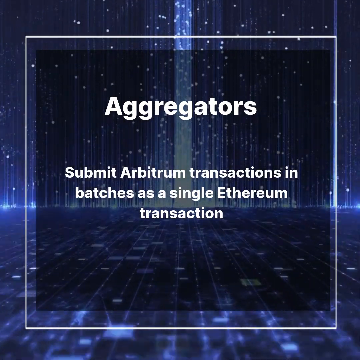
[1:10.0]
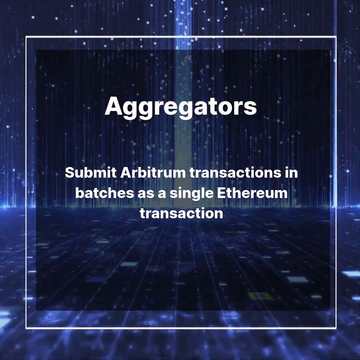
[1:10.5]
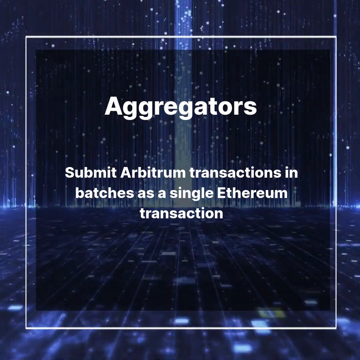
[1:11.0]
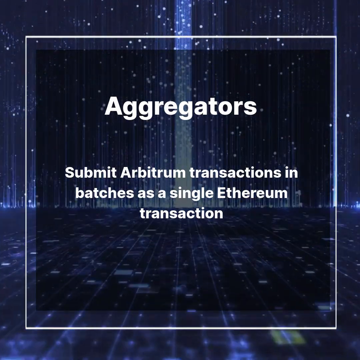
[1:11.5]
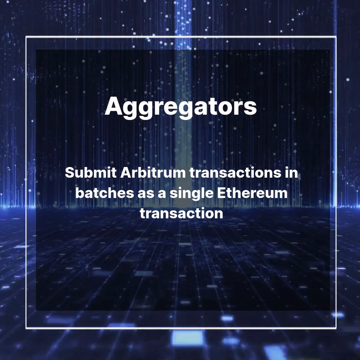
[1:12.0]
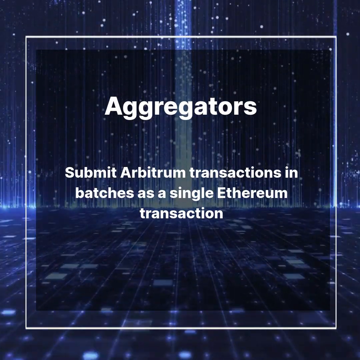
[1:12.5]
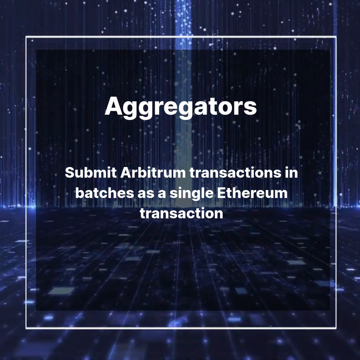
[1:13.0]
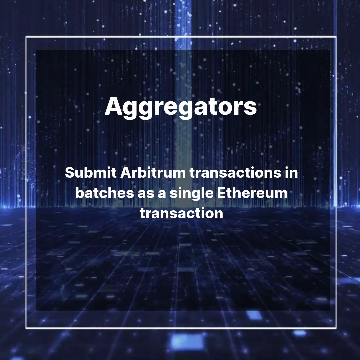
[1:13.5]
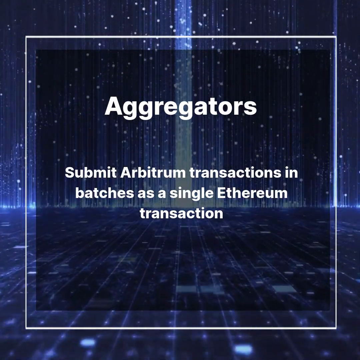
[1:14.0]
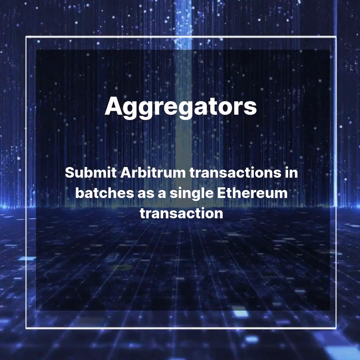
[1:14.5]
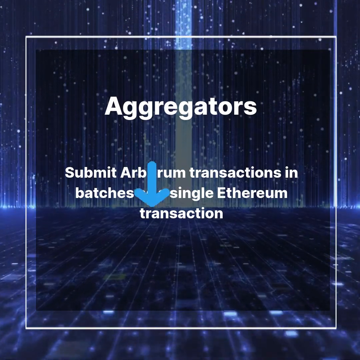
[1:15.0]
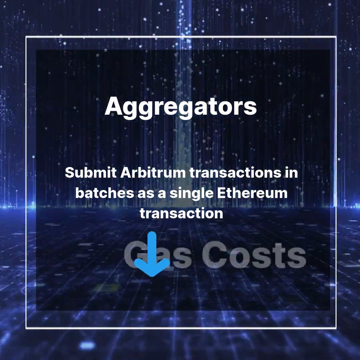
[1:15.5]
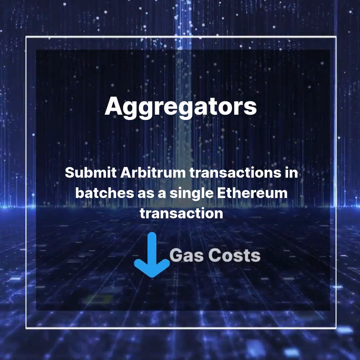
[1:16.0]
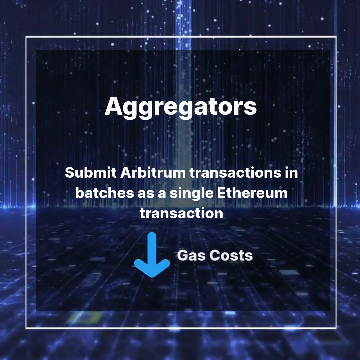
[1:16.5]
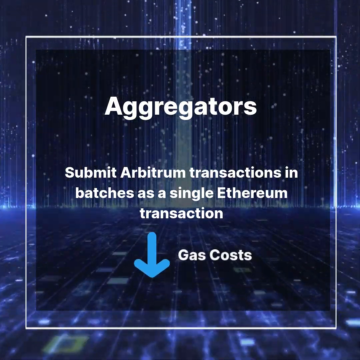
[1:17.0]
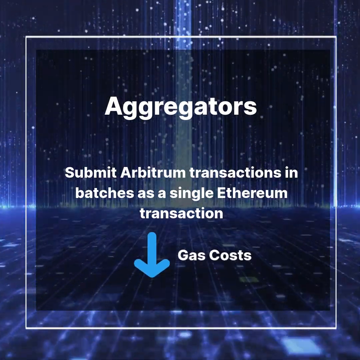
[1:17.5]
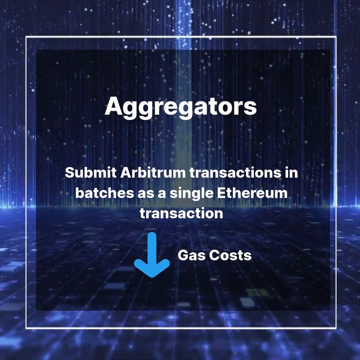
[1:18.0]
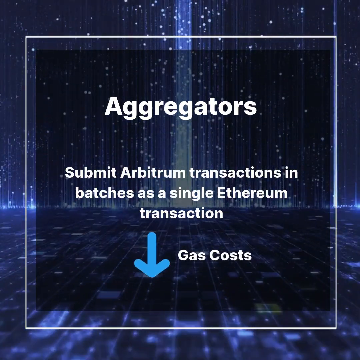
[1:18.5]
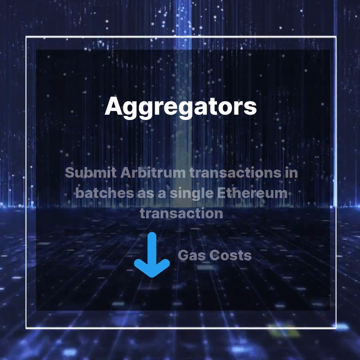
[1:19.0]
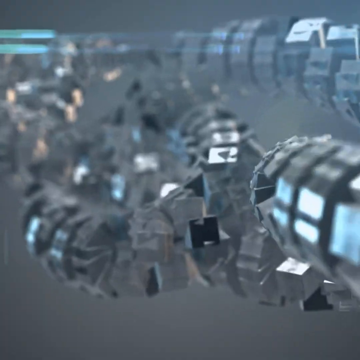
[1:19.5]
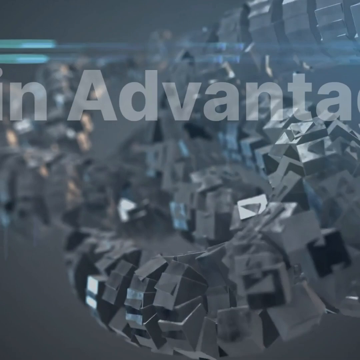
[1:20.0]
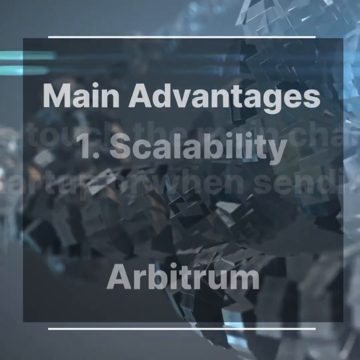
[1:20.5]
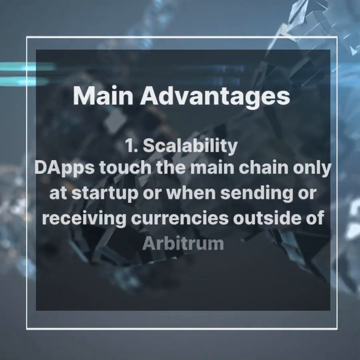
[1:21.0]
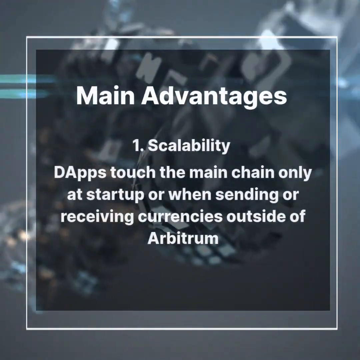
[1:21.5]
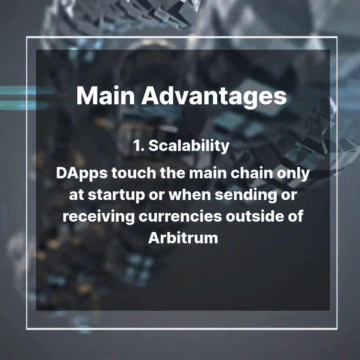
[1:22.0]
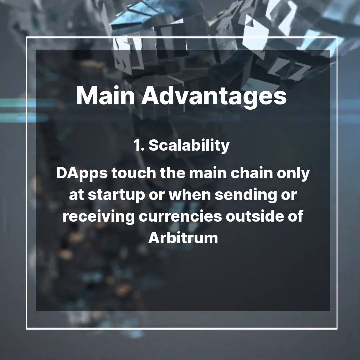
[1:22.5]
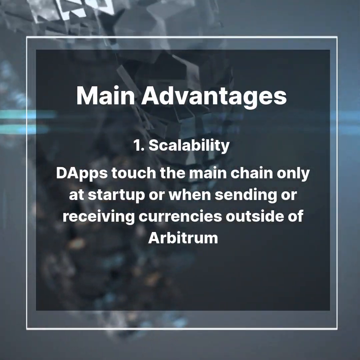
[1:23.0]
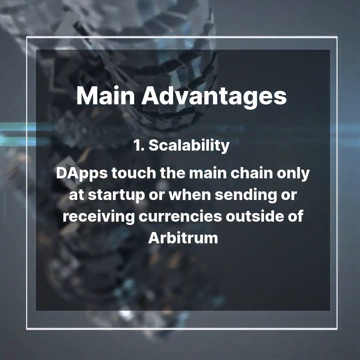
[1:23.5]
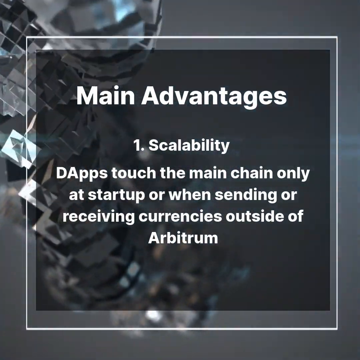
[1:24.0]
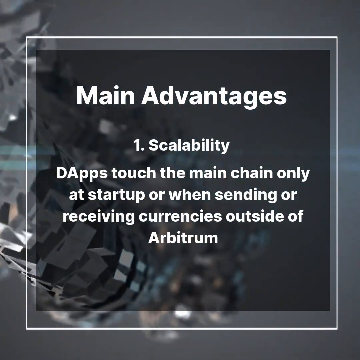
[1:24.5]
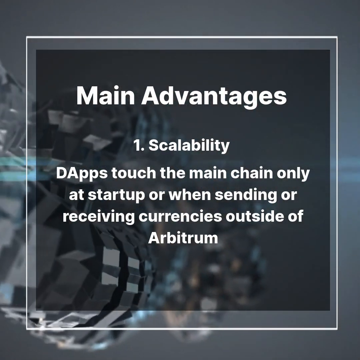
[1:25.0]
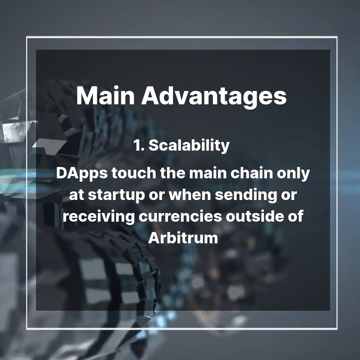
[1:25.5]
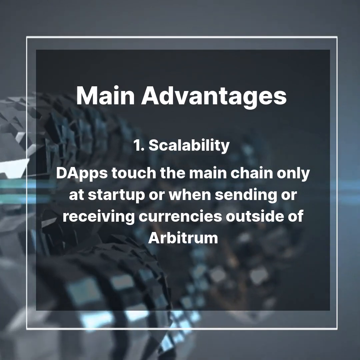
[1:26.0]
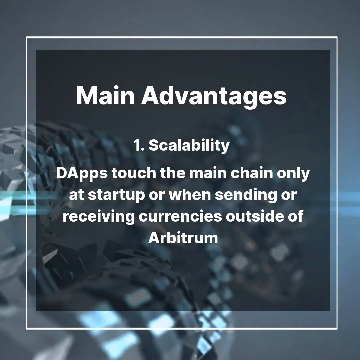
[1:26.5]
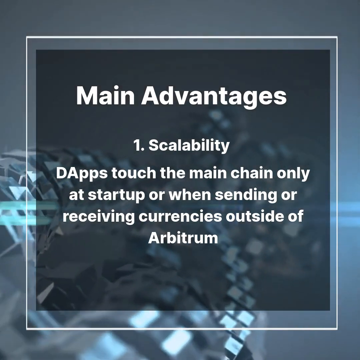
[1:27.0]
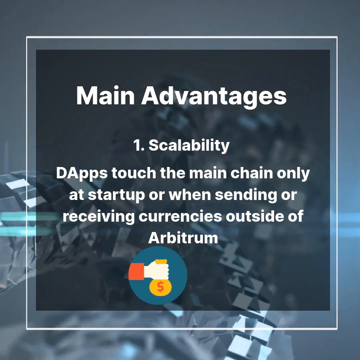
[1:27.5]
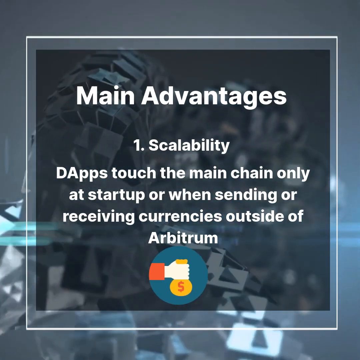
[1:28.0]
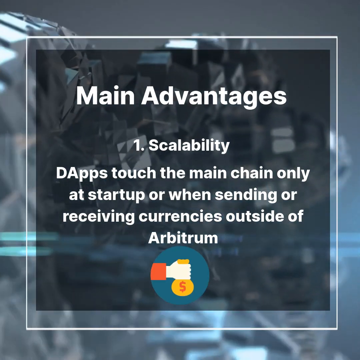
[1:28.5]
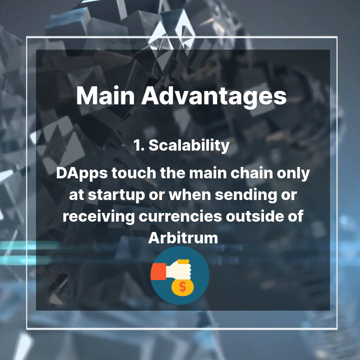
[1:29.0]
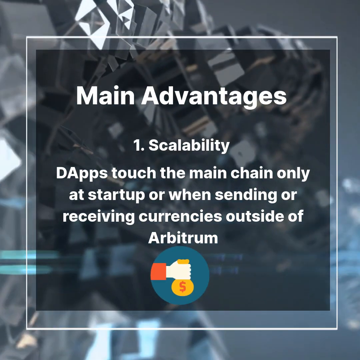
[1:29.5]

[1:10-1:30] The text reads "aggregators submit Arbitrum transactions in batches as a single Ethereum transaction." An arrow points down next to the text "gas costs". Another chain appears, this one silver, and the screen says "main advantages", with item number 1, scalability: dapps touch the main chain only at startup or when sending and receiving currencies outside of Arbitrum. Before the shot ends, a small symbol at the bottom appears to show a hand holding a money bag.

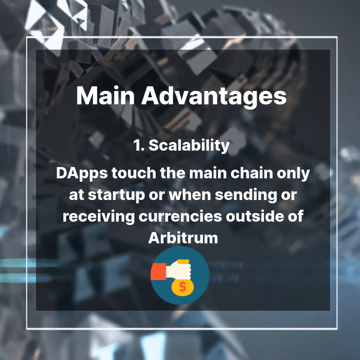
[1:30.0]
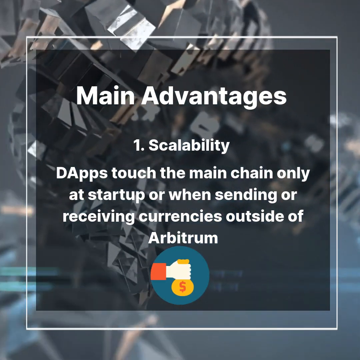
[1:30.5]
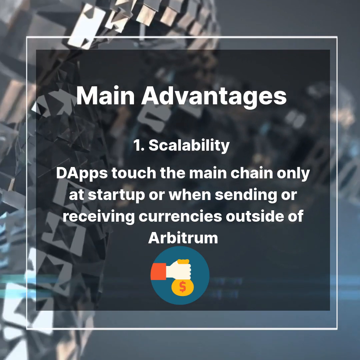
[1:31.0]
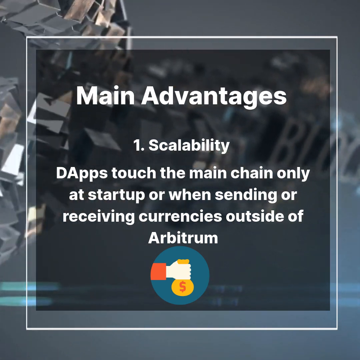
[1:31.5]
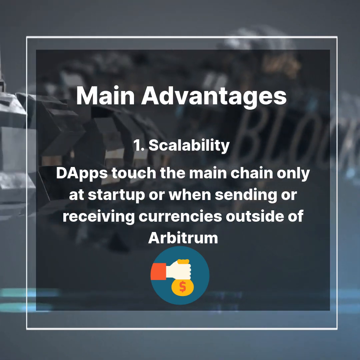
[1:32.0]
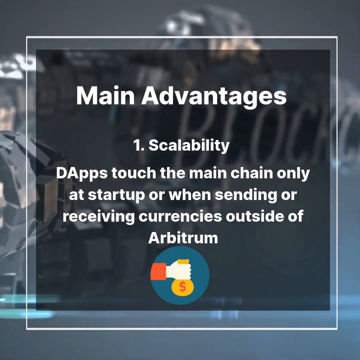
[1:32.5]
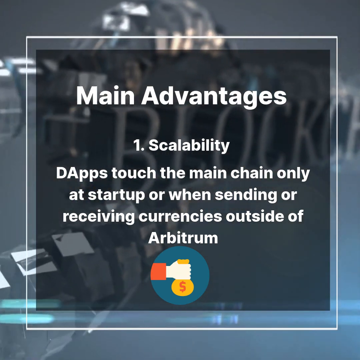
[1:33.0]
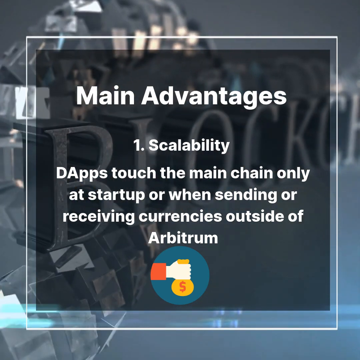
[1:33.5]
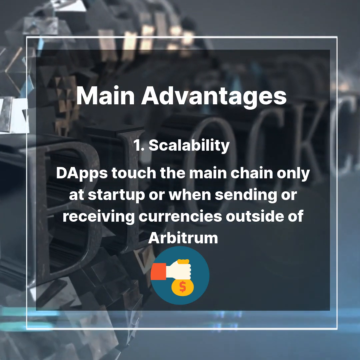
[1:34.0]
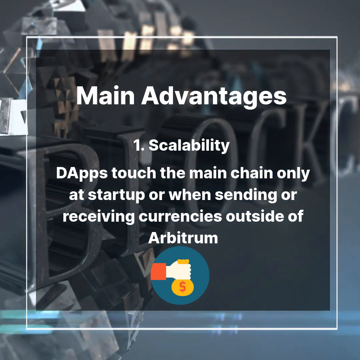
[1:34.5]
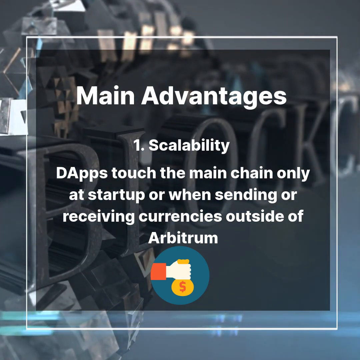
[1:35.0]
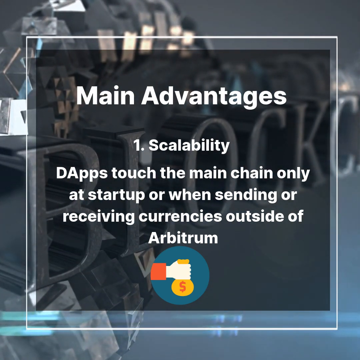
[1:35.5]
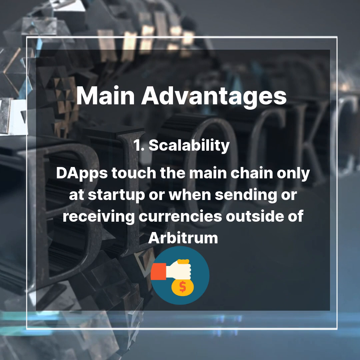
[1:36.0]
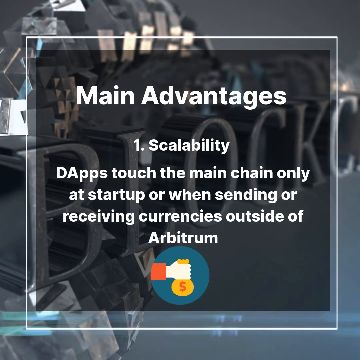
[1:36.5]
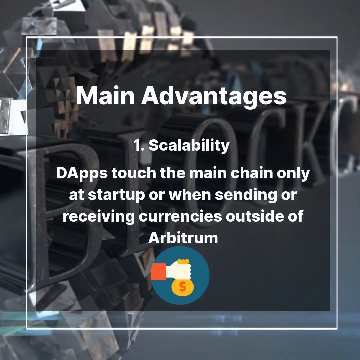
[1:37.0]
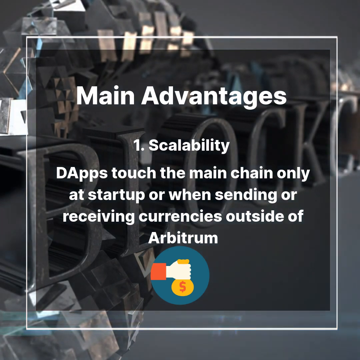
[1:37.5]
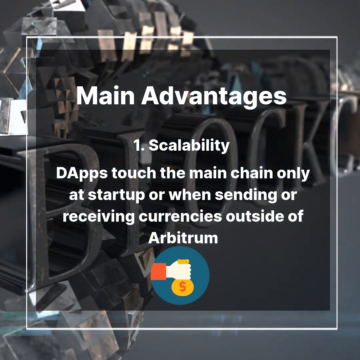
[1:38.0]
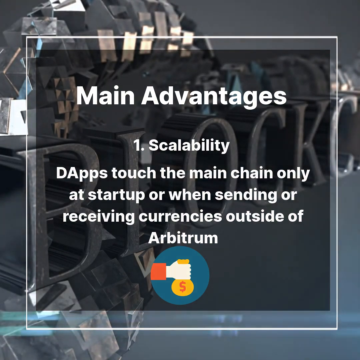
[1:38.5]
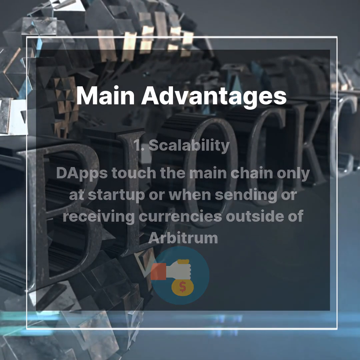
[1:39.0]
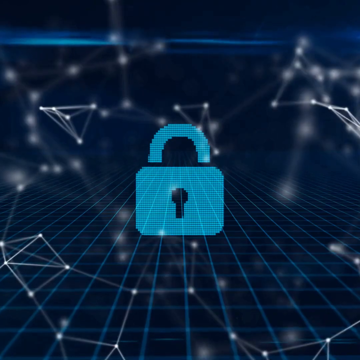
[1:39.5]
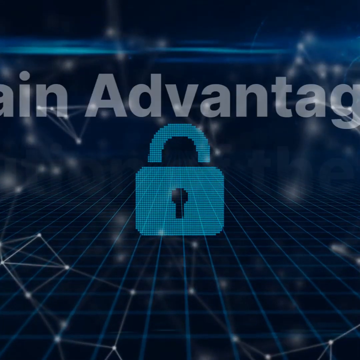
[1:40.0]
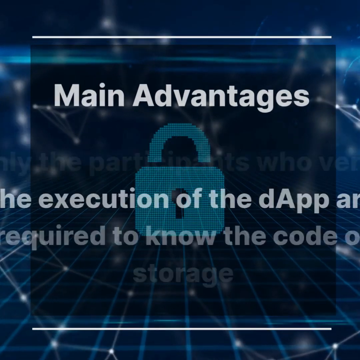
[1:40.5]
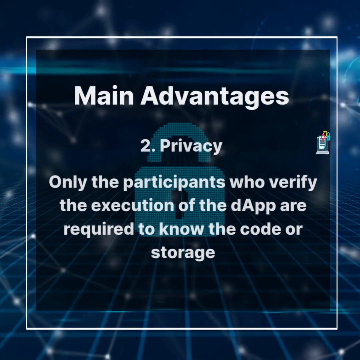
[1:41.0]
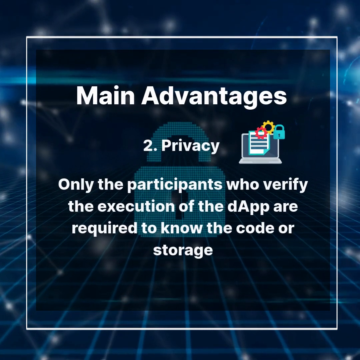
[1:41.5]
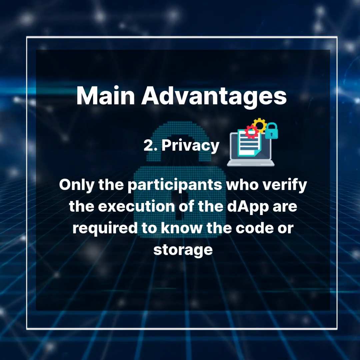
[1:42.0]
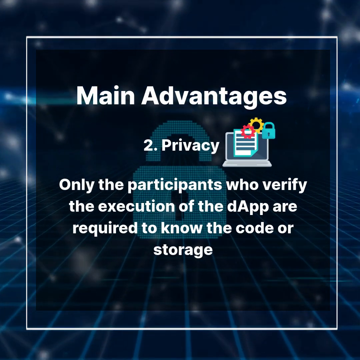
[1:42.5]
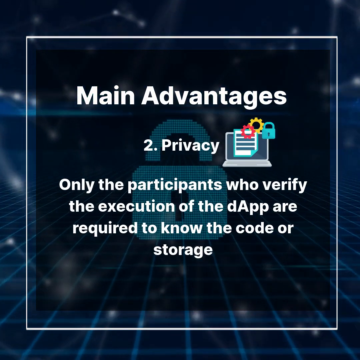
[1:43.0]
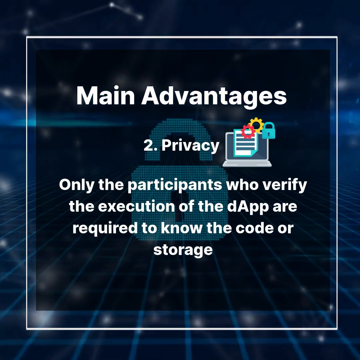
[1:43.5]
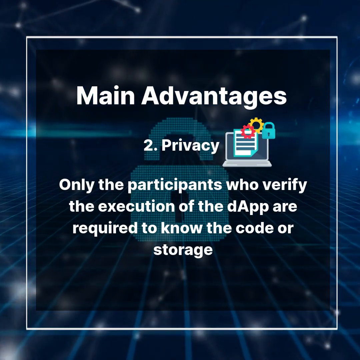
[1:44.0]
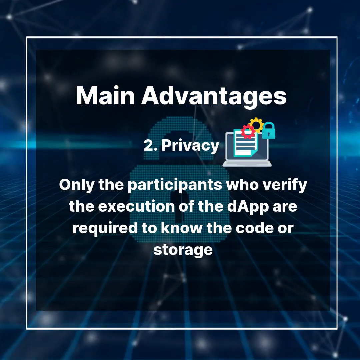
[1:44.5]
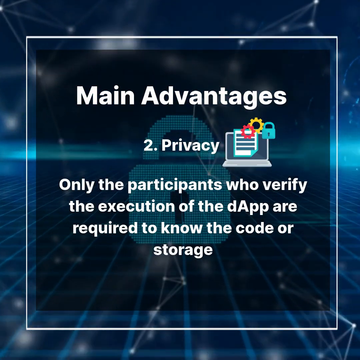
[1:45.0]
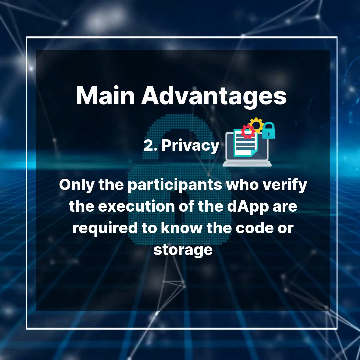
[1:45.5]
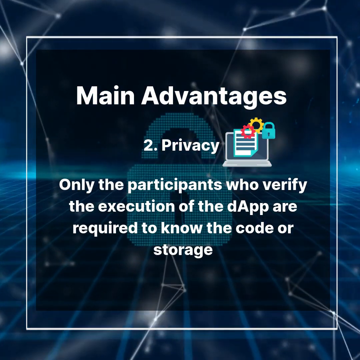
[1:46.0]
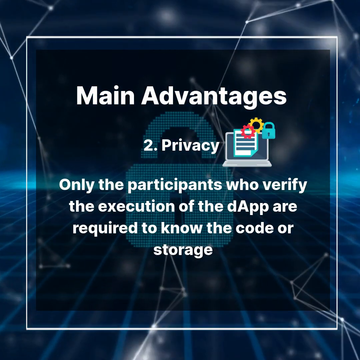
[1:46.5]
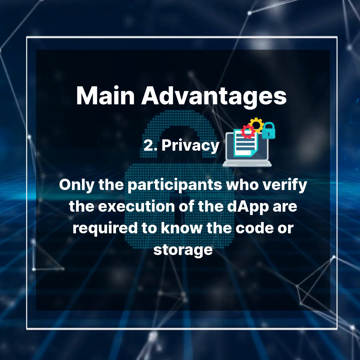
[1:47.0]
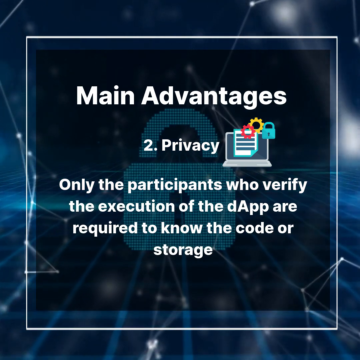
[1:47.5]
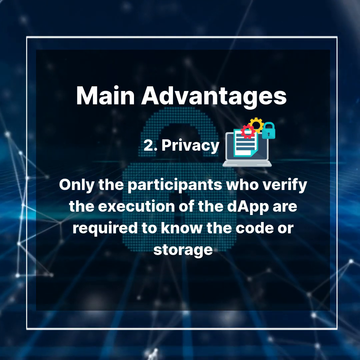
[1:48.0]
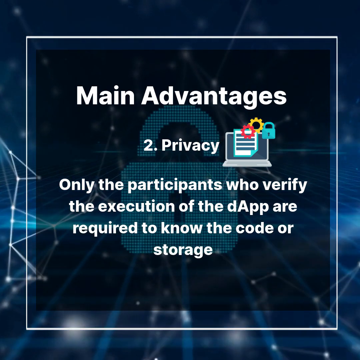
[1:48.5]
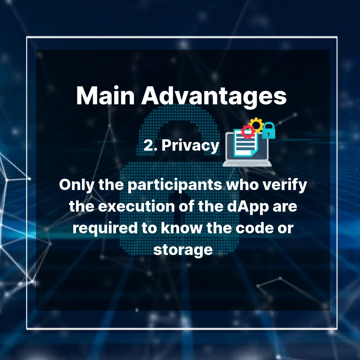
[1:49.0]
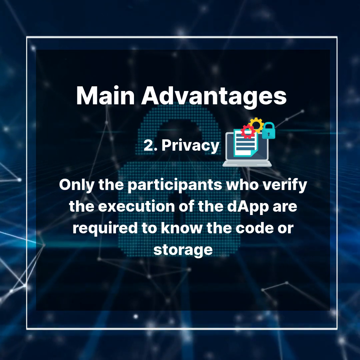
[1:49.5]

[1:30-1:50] A silver chain is in the background, seemingly symbolizing blockchain, and the background also says "blockchain". The main screen reads "main advantages 1 scalability" with the text "dapps touch the main chain only at startup when sending and receiving currencies outside of Arbitrum." Then, on a blue screen with a small lock, the text reads "main advantages 2 privacy: only the participants who verify the execution of the dapp are required to know the code or storage." A small laptop image with a lock is on the screen.